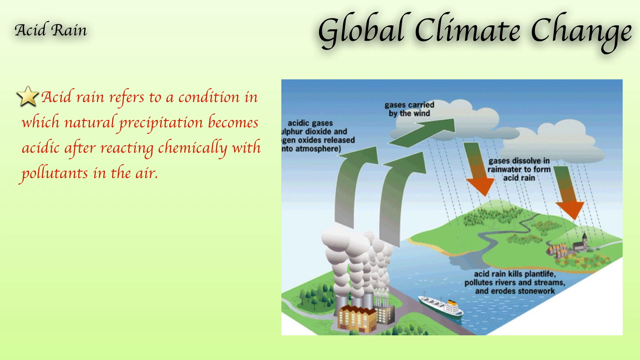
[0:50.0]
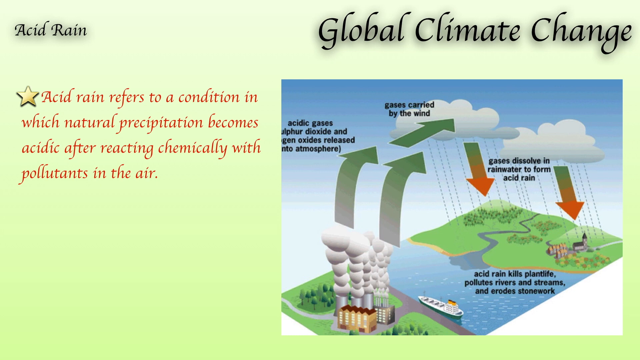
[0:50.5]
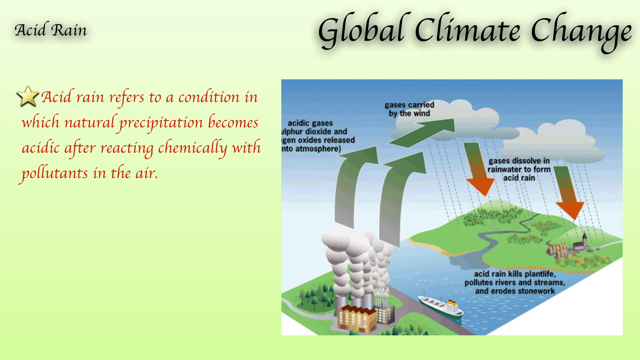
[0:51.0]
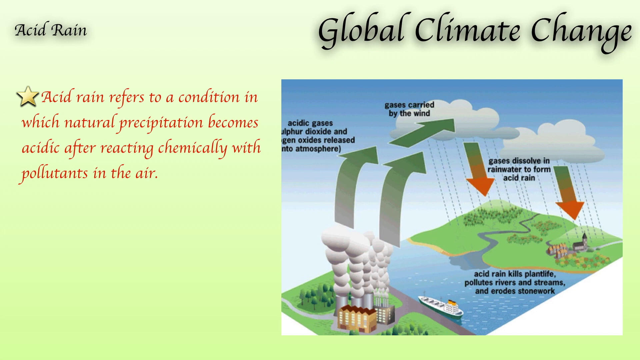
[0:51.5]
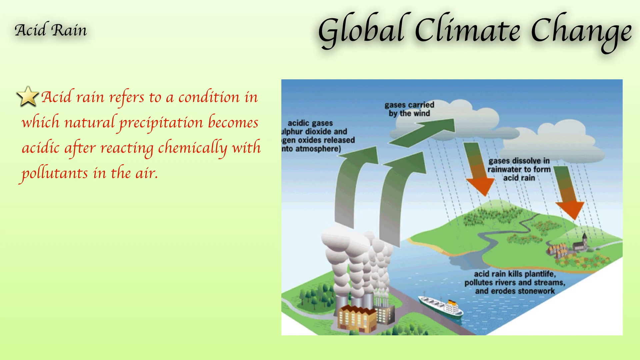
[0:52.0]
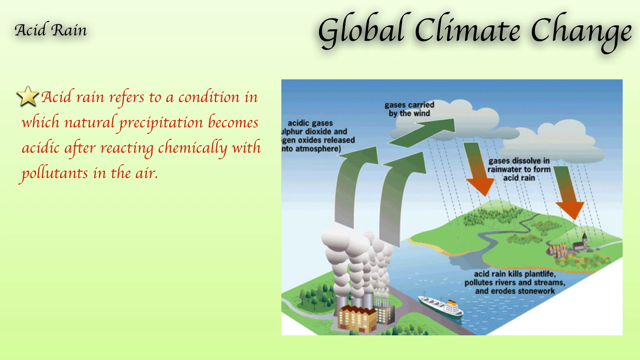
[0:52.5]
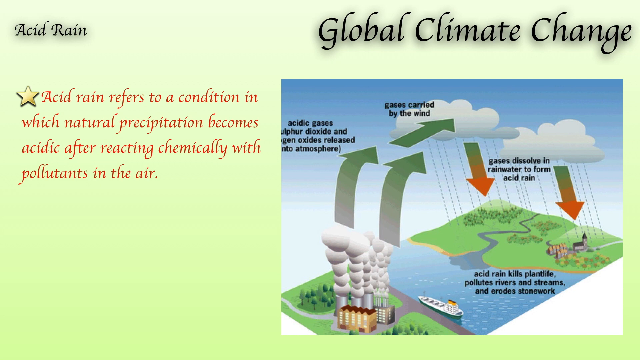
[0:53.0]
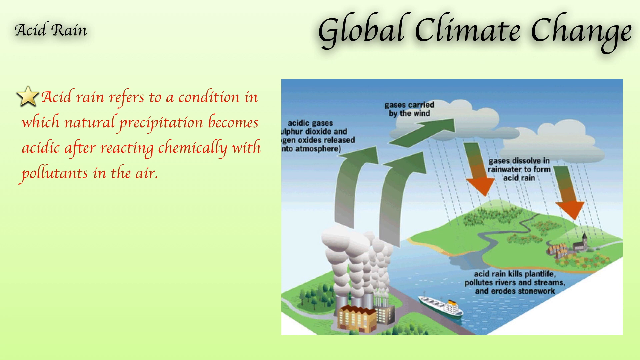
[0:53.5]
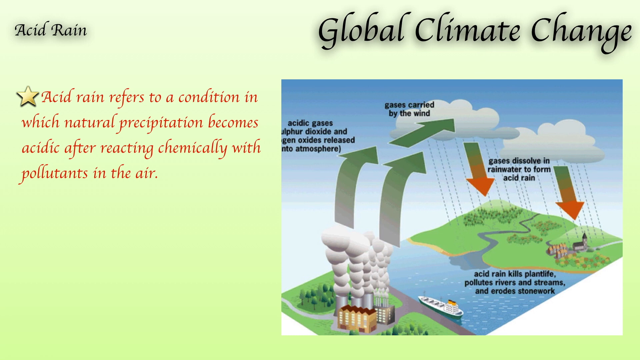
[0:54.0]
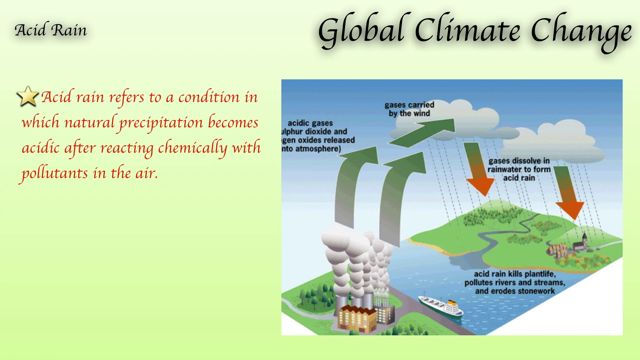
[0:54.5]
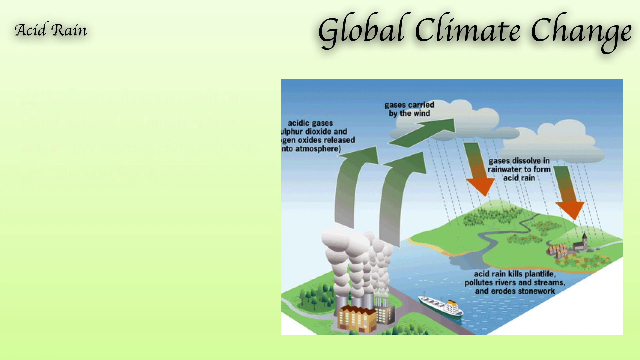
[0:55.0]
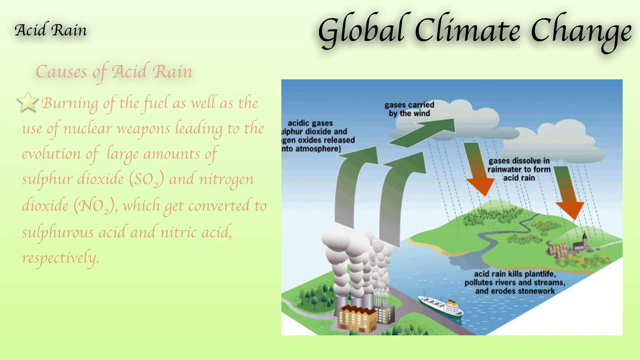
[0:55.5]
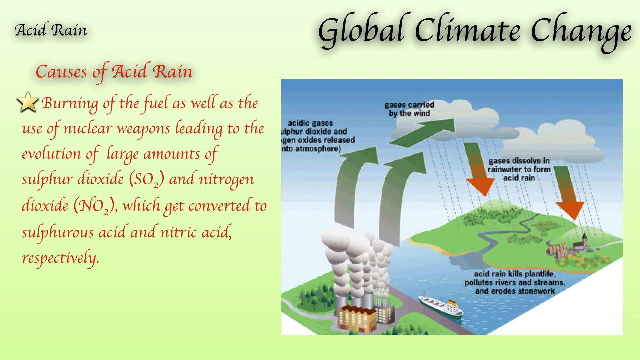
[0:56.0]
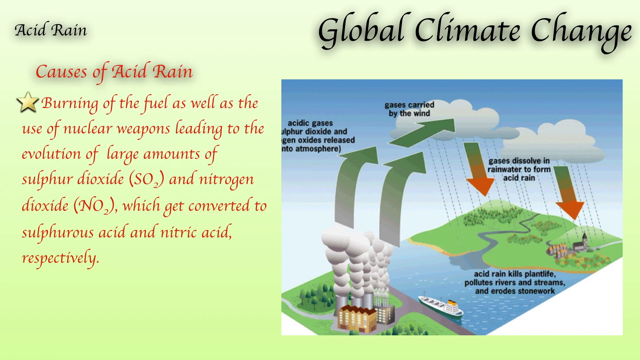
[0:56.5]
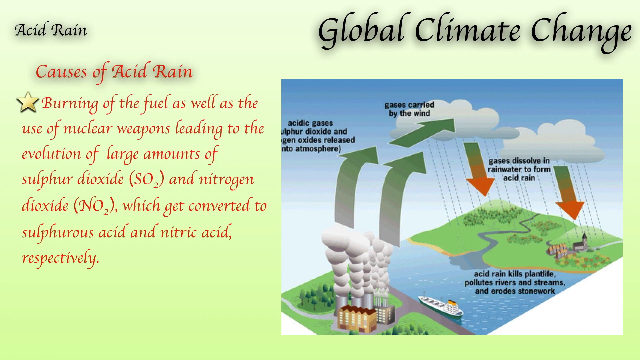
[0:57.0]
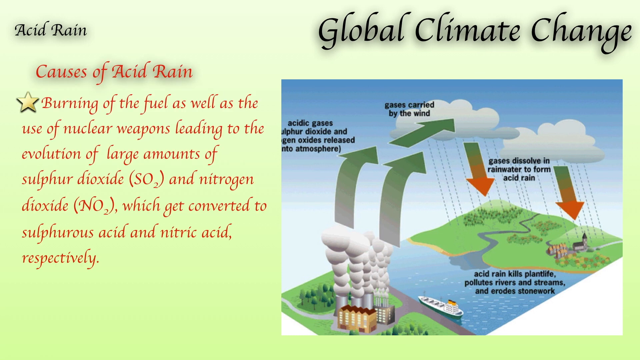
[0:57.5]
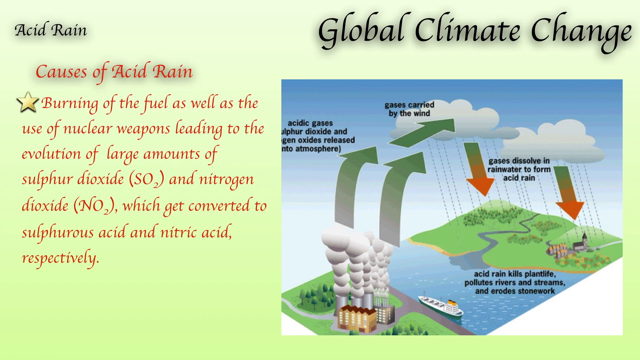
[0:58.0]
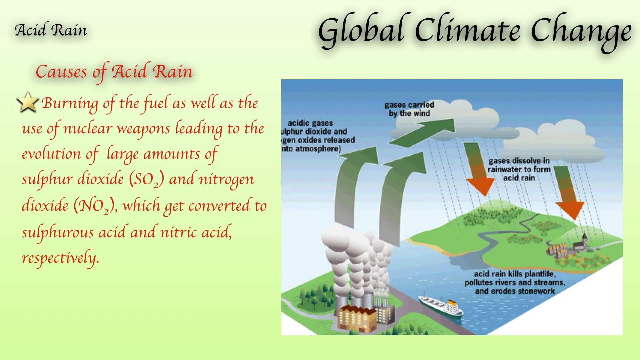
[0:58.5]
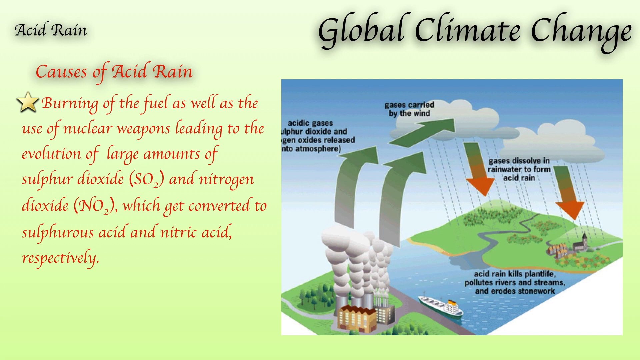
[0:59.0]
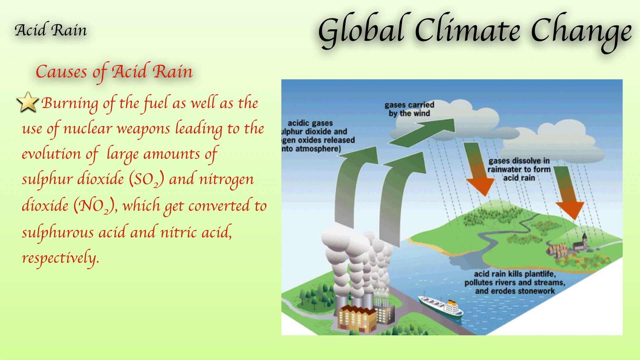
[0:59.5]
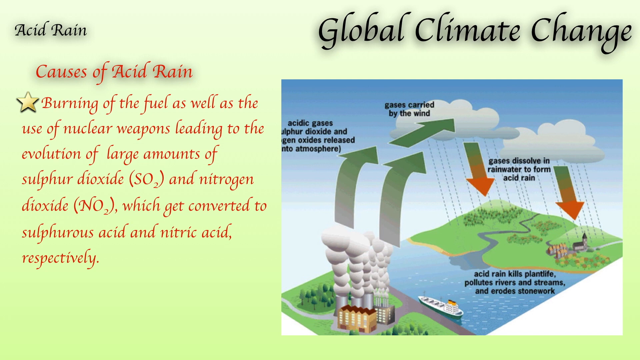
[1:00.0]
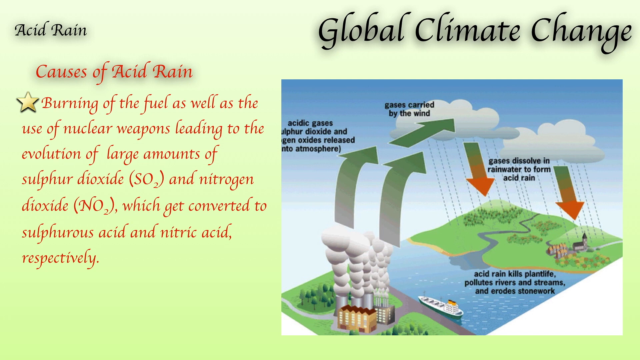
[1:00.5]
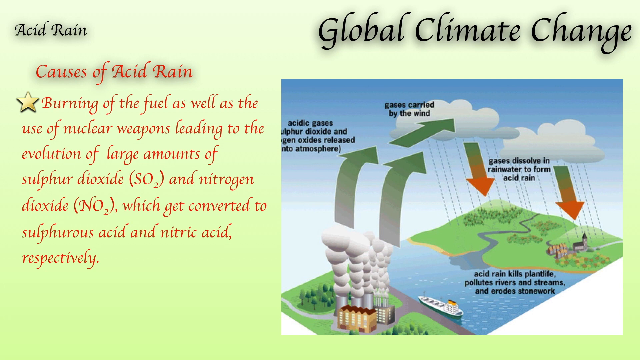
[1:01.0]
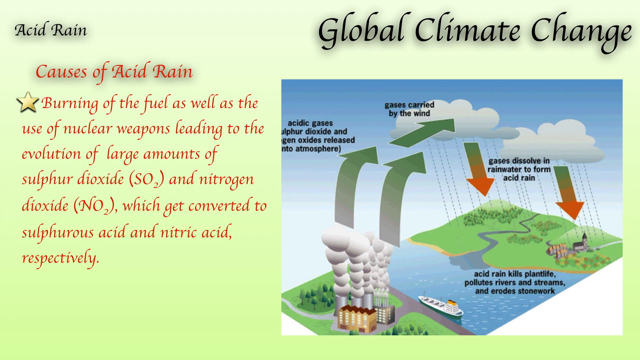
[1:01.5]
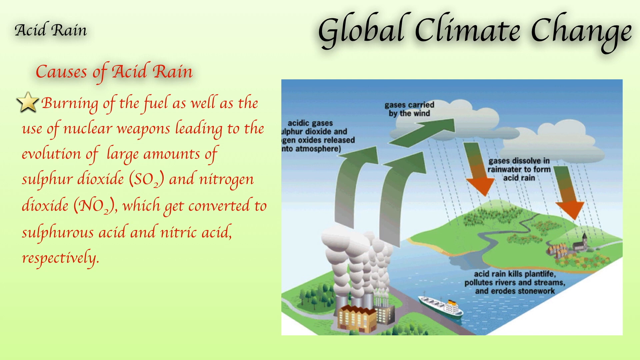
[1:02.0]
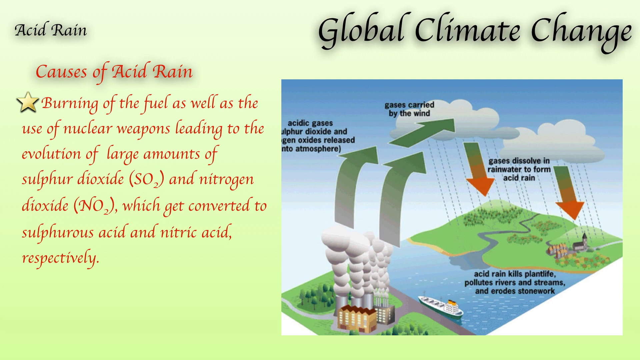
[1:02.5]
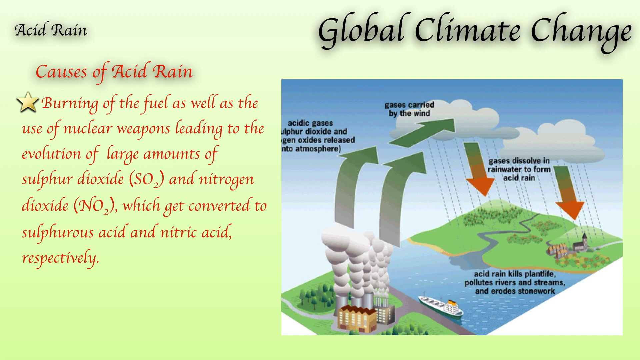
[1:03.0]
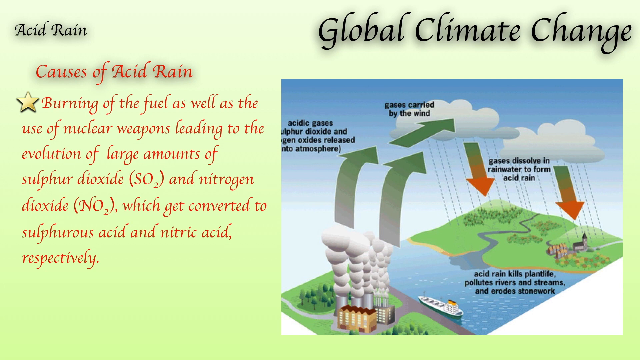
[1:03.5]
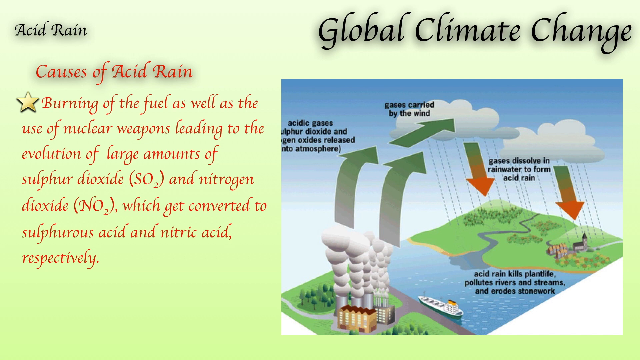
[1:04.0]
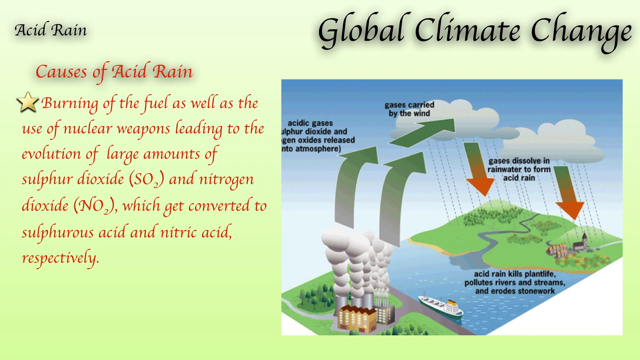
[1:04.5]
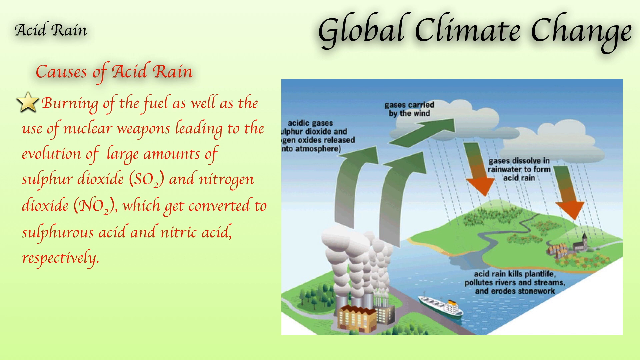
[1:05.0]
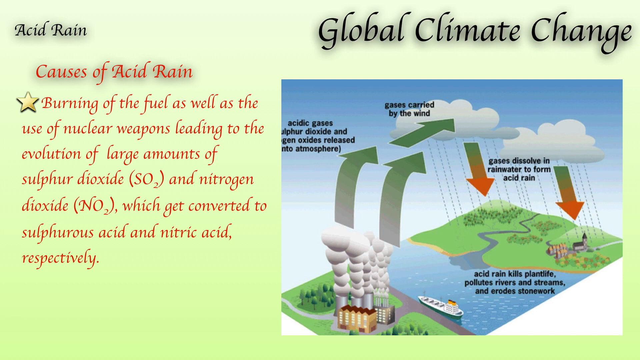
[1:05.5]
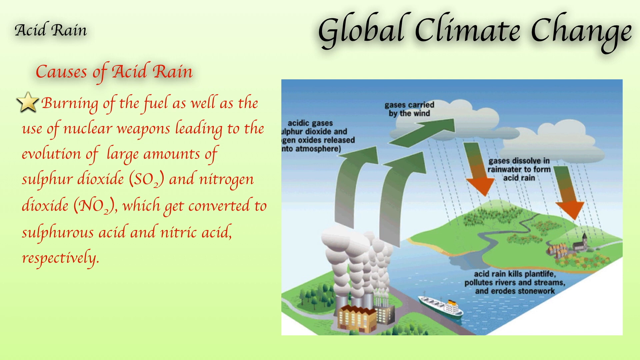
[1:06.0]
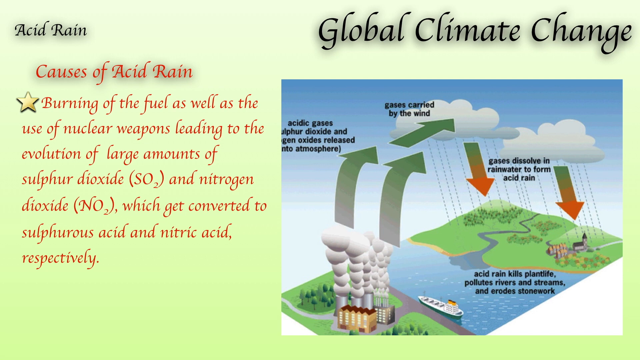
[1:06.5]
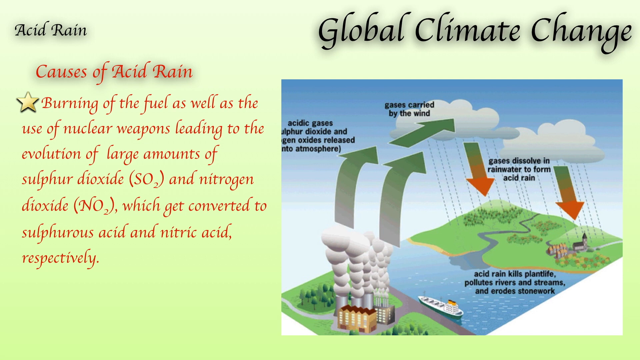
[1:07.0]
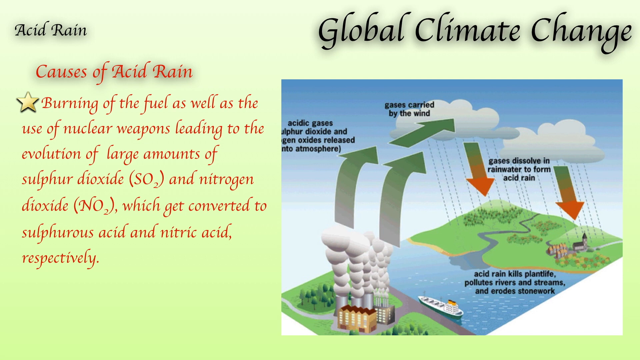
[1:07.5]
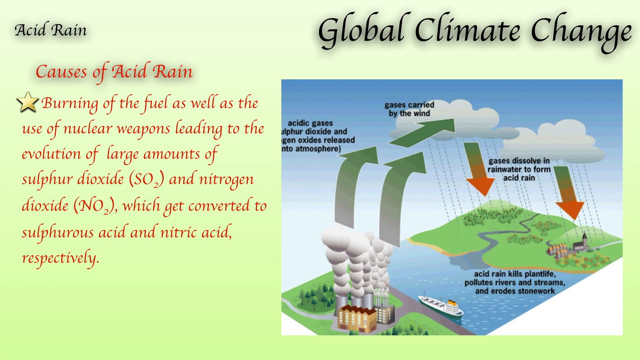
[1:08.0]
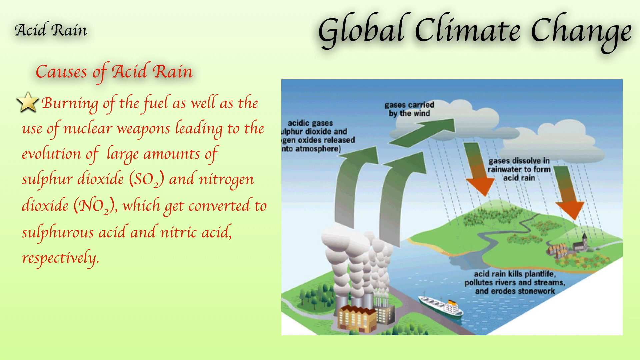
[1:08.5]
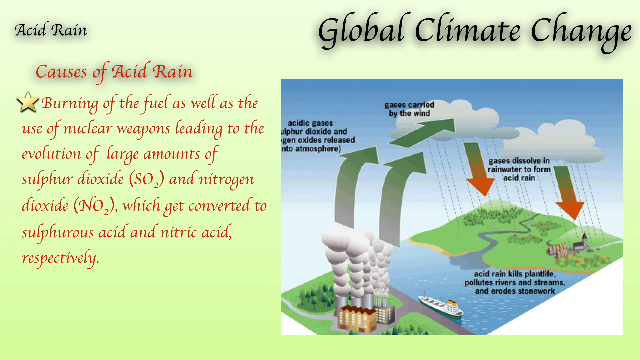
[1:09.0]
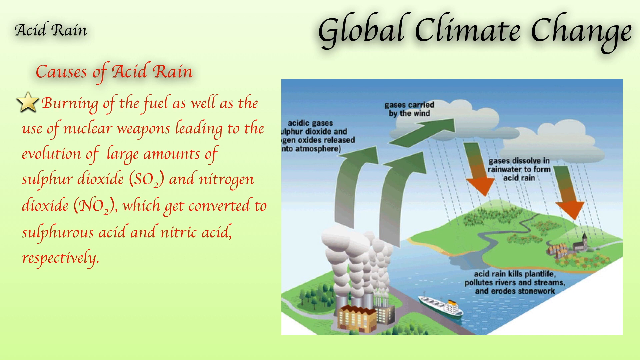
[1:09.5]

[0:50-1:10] The text and image at first remain the same, but a quick transition replaces the acid rain definition with red text reading "causes of acid rain". Its definition reads "burning of the fuel as well as the use of nuclear weapons leading to the evolution of large amounts of sulfur dioxide and nitrogen dioxide, which can get converted to sulfurous acid and nitrous acid". This definition has a star as before, but is slightly larger, with bigger red text. The rest of the slide remains the same: the small black text "acid rain" is in the top left corner, global climate change is still on the top left of the image in bigger black text, and the image describing the process of acid rain remains, with pollution, clouds and a rain cycle shown using arrows and explanations in black text. Everything stays the same to the end of this part.